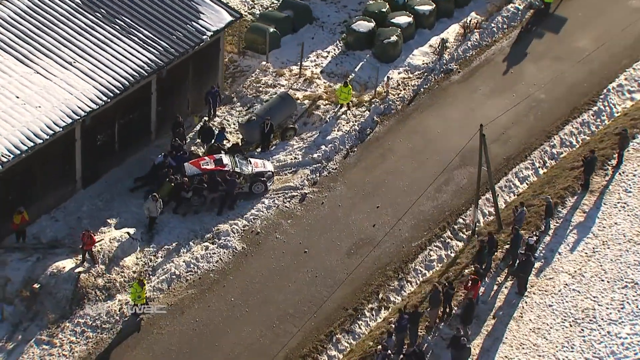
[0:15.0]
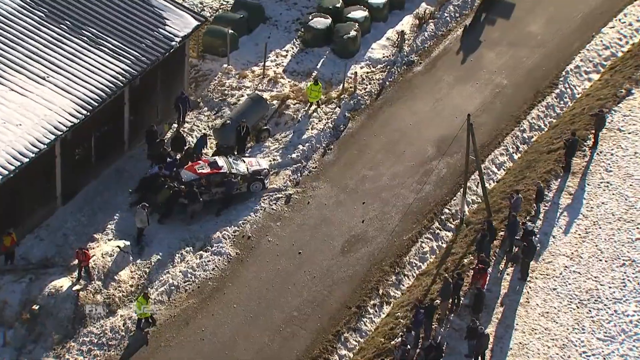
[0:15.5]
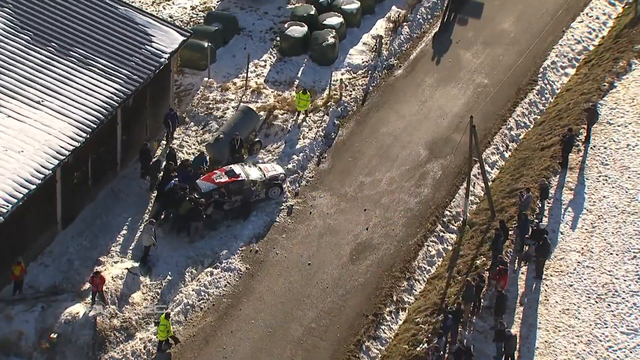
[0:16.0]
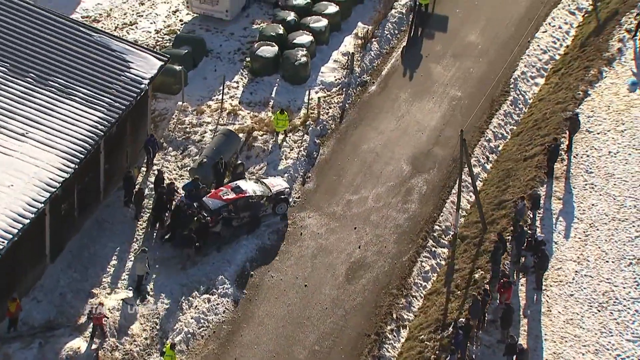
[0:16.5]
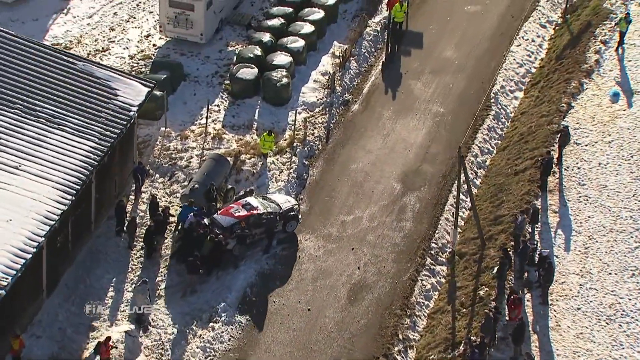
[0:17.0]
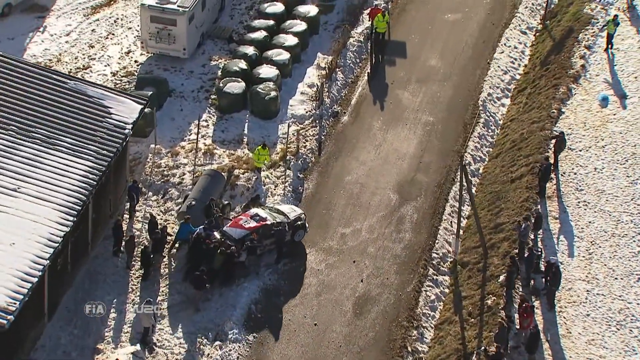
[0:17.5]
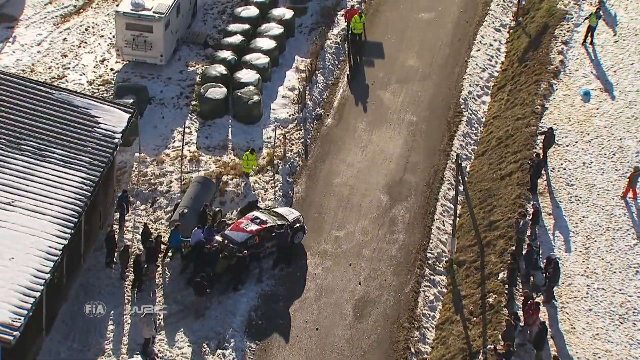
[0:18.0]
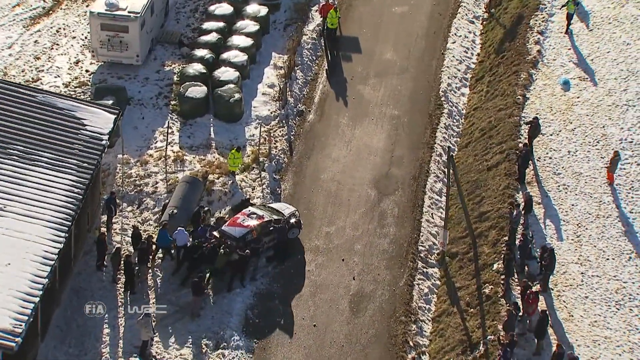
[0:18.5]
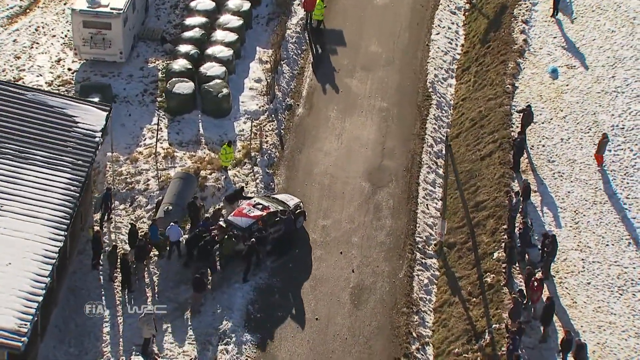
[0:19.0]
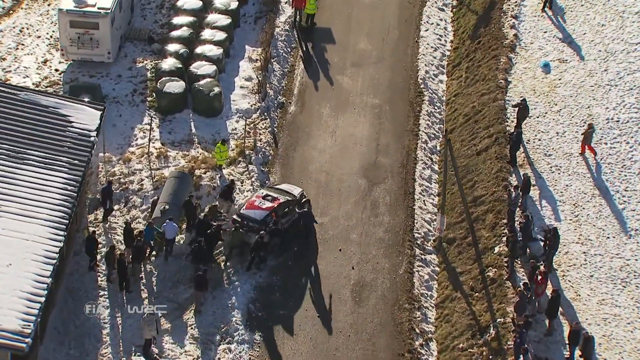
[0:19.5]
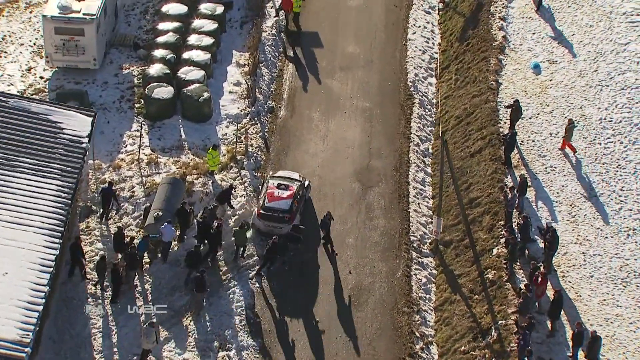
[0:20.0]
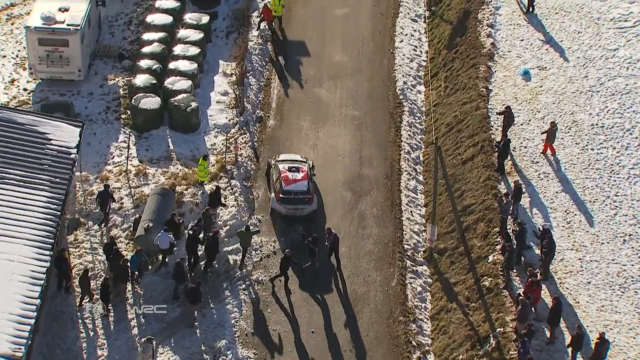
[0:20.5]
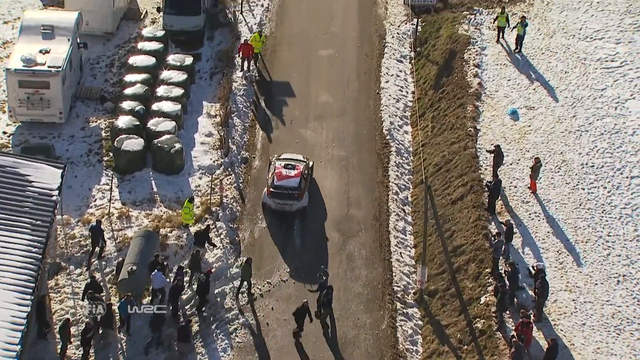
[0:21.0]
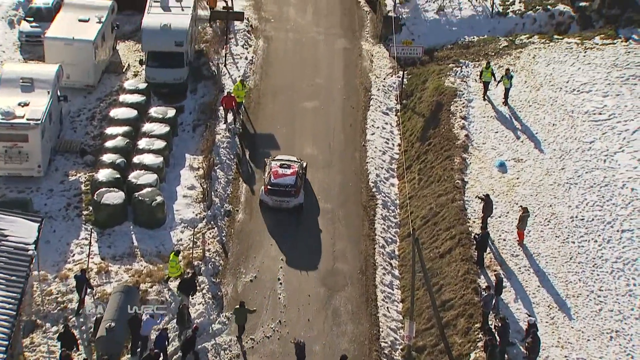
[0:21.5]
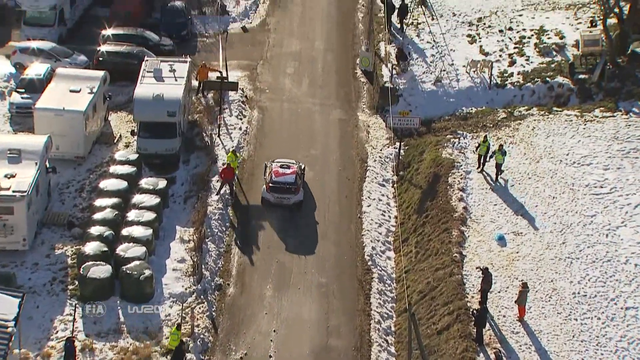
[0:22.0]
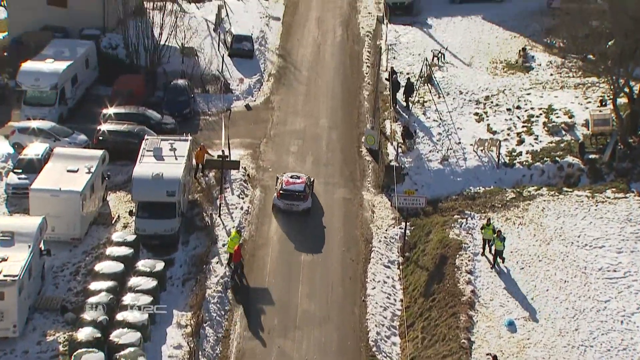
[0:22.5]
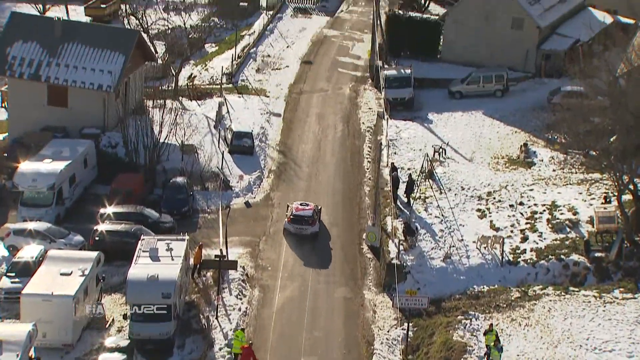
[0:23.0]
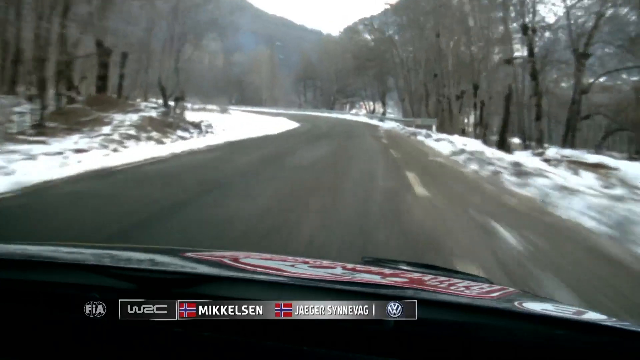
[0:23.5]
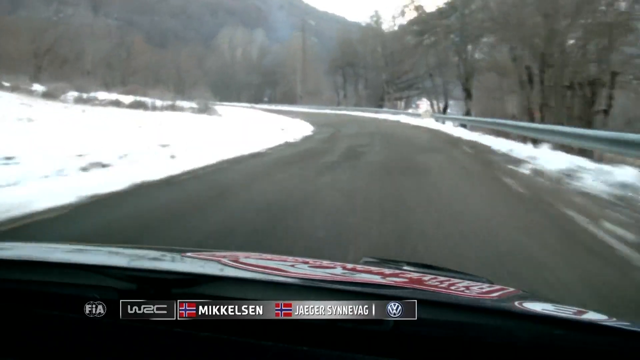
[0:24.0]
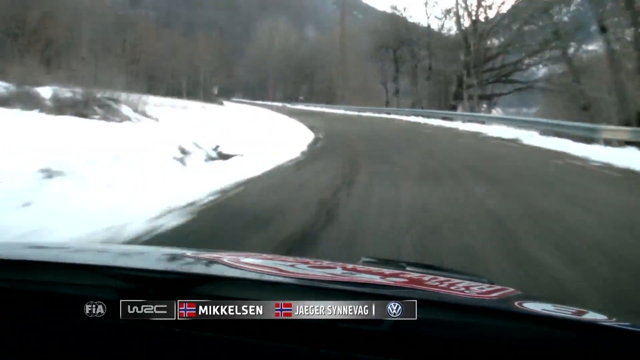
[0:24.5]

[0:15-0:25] An aerial view shows several people surrounding a car outdoors during the day. A large shadow is visible, suggesting it is possibly afternoon or closer to evening. A large garage area on the left side has a lot of white snow on top of it. The people push the car back onto the road. From above, the car is a mixture of black, white and red; the number on top is too blurry to read clearly but looks like 12. As soon as the car is on the road, it starts driving upward in the frame, and the aerial camera pans upward to follow it. Several people are on the left and right sides of the road, apparently watching the car. Parked vehicles appear on the left side, including cars, trucks and vans, mostly white and black. The scene changes to the inside of the car, a sort of dash cam viewpoint that looks like it is from the driver's position. Names at the bottom of the screen read "Mikkelsen" and "Jaeger Synnevag," with red and blue flags next to them. The dash cam view continues as the car drives on.